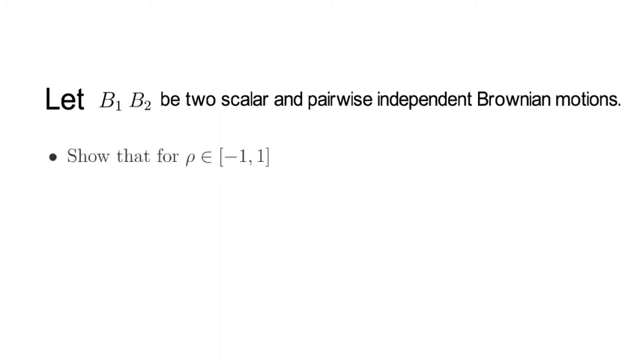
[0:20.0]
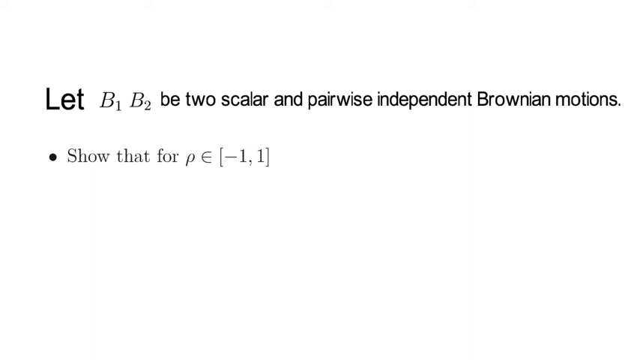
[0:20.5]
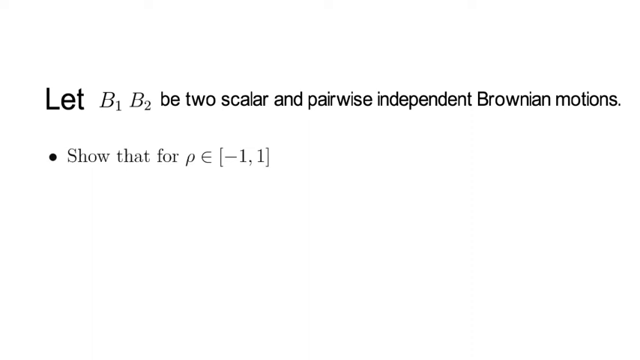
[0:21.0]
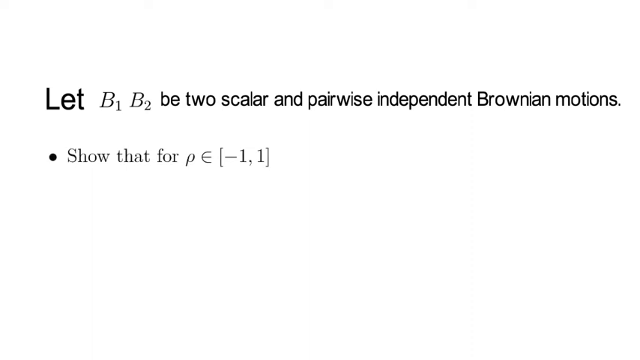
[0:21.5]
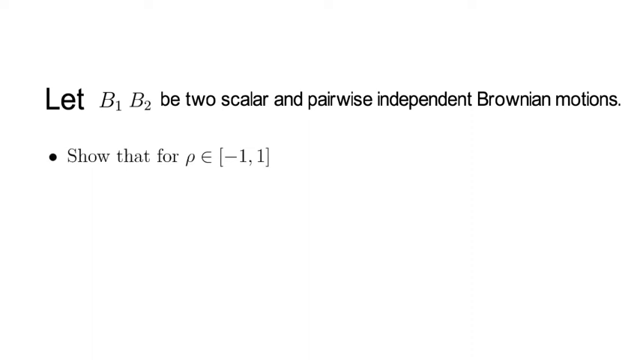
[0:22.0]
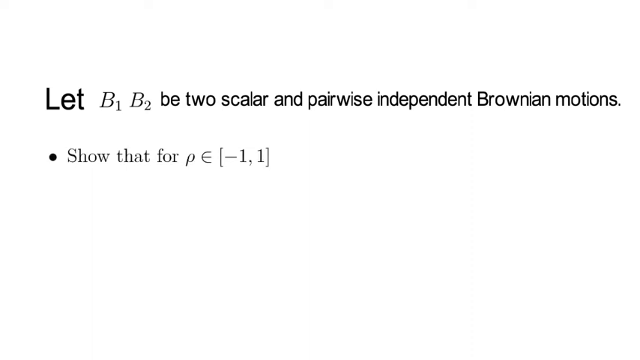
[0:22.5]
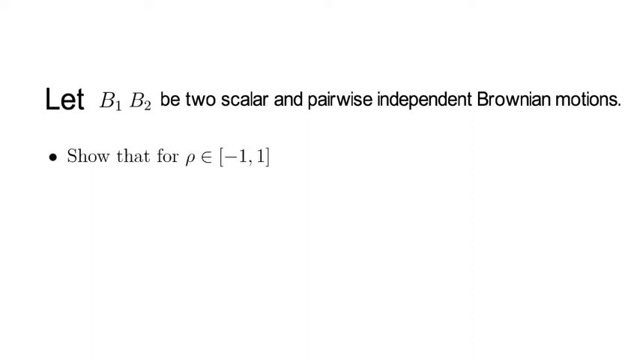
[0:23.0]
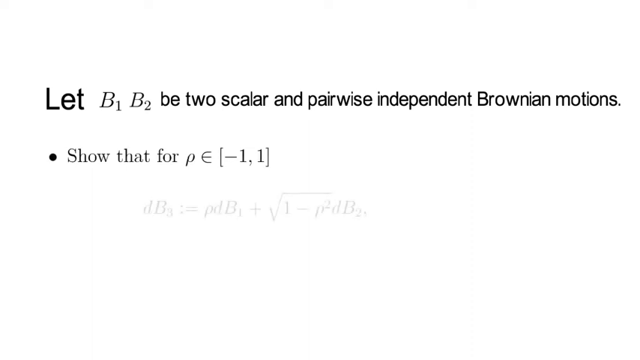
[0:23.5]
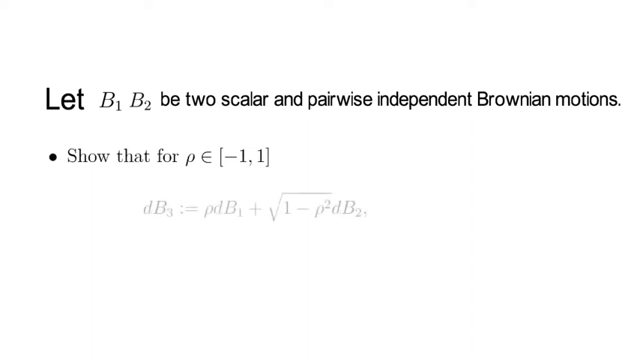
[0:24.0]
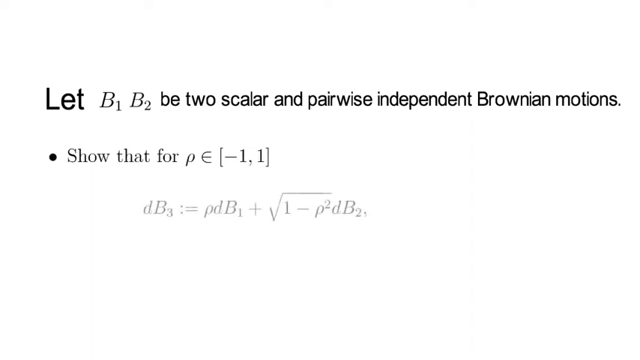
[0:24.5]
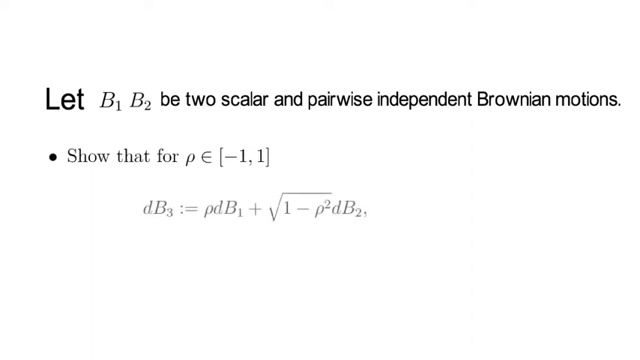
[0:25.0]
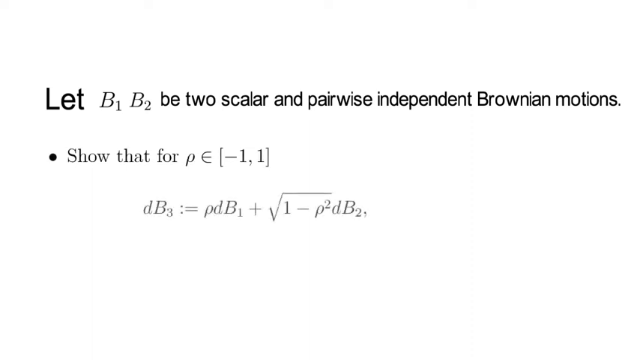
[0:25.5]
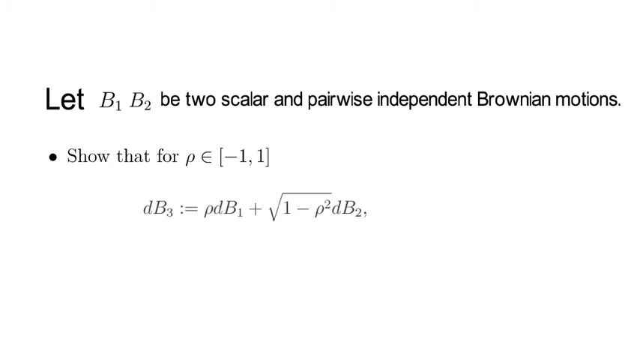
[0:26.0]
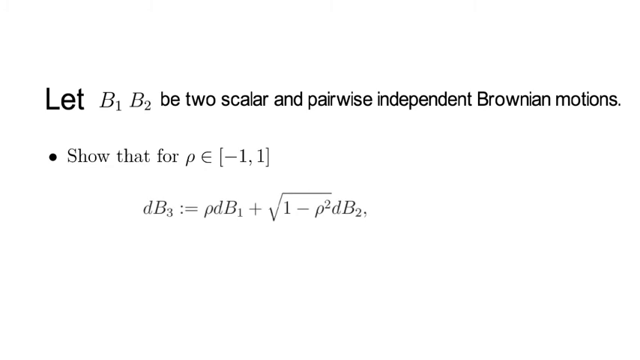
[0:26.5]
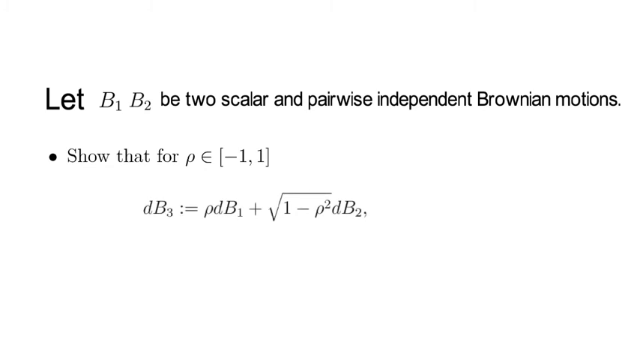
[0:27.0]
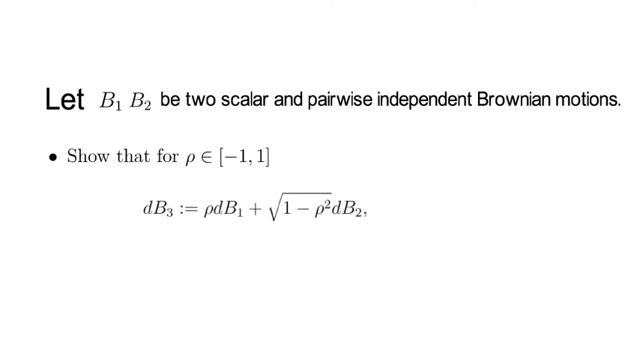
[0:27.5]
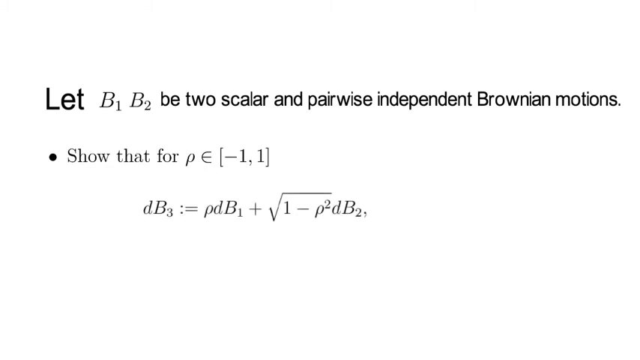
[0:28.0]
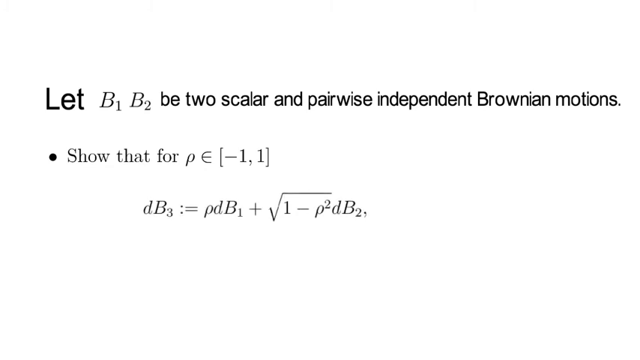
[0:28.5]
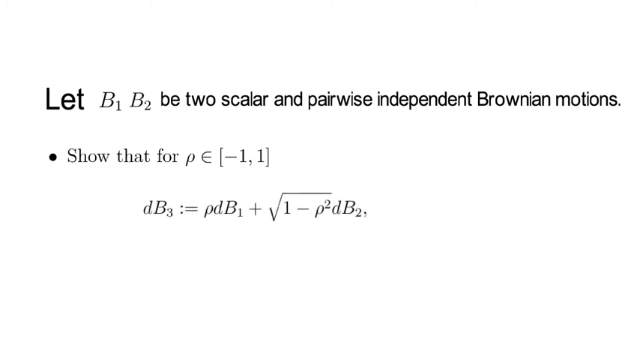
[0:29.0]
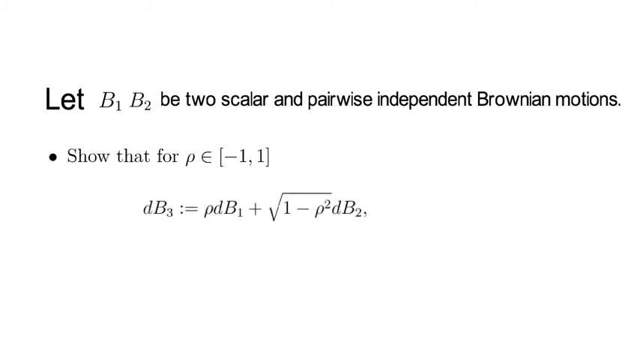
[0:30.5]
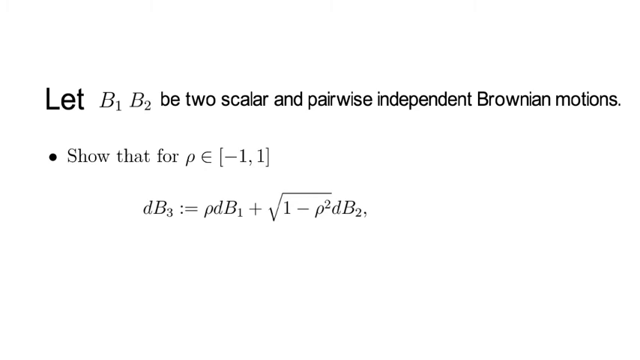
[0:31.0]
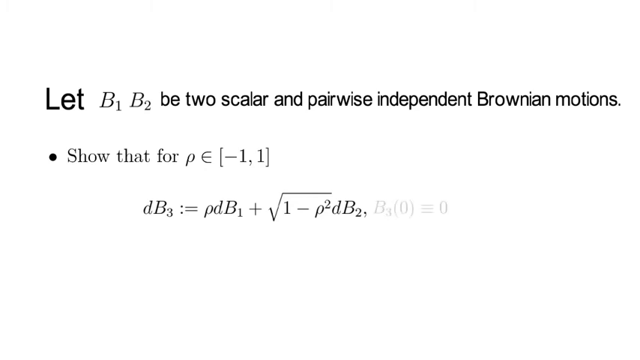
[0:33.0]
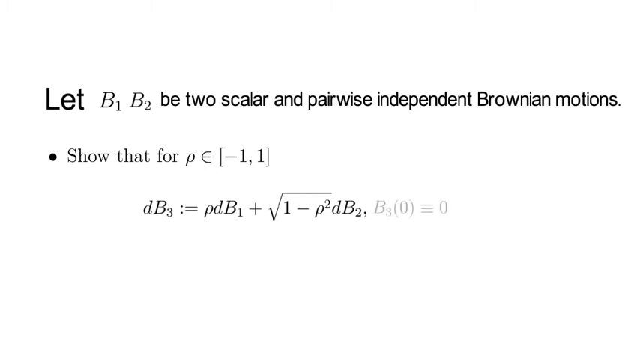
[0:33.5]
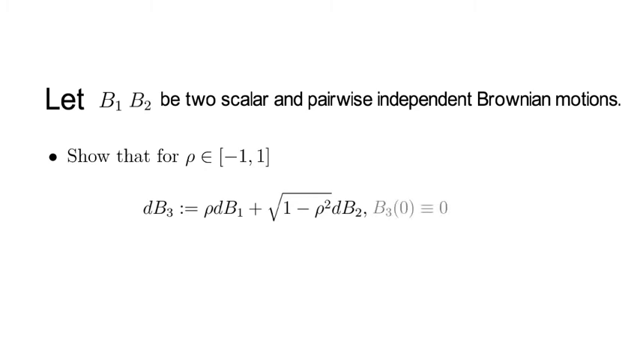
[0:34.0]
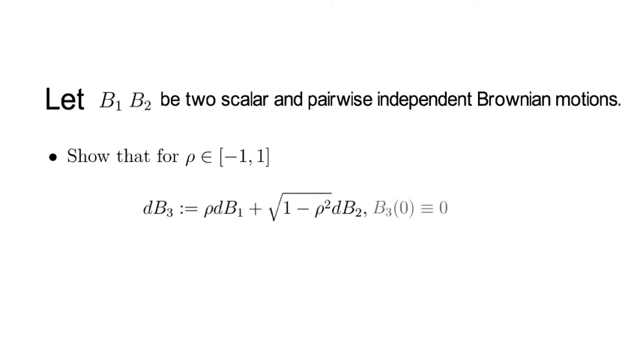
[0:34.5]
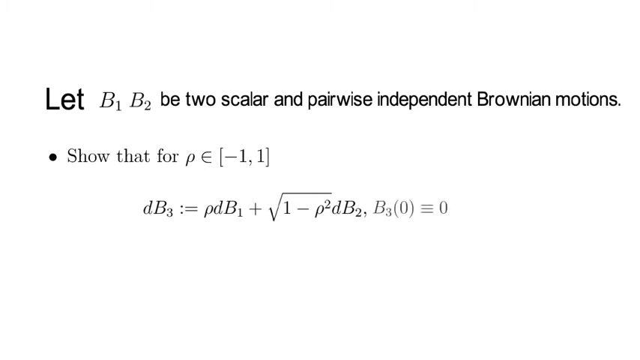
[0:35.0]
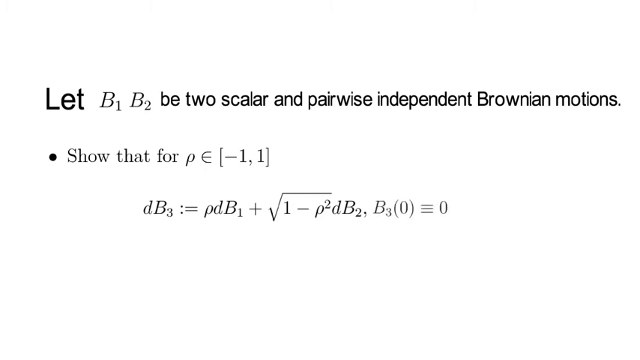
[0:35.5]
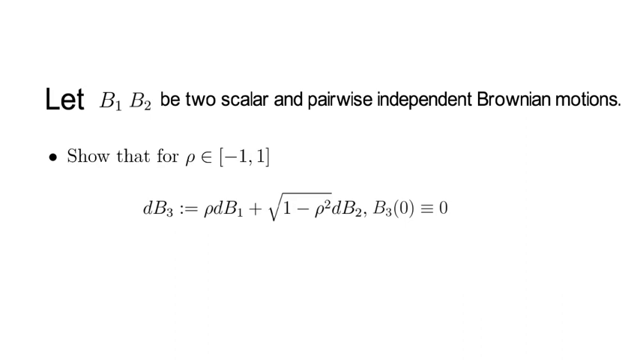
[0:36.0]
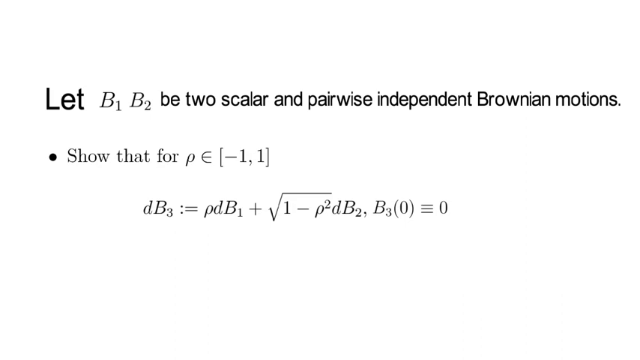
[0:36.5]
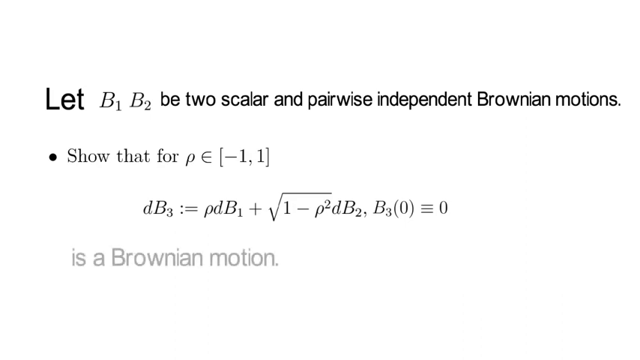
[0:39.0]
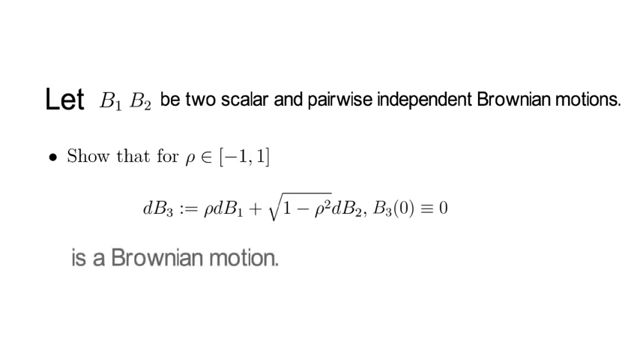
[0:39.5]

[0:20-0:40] A printed paper is shown with text being explained. At the top it reads "let B1, B2" followed by "pairwise independent Brownian motions", and below that "show that for PE-1, 1". Further down is an equation that needs to be solved, beginning "DB3 is equal to PDB1", with text stating it is a Brownian motion. The video continues to show how the figures are worked out. The background is white and the words being written are black, while the bottom part of the paper is greyish. The text keeps being typed as the video progresses, in a lesson about Brownian motions.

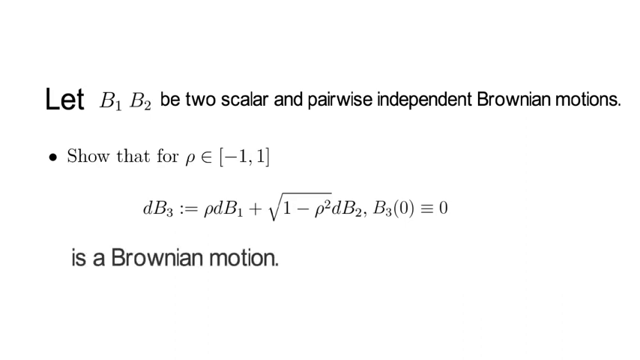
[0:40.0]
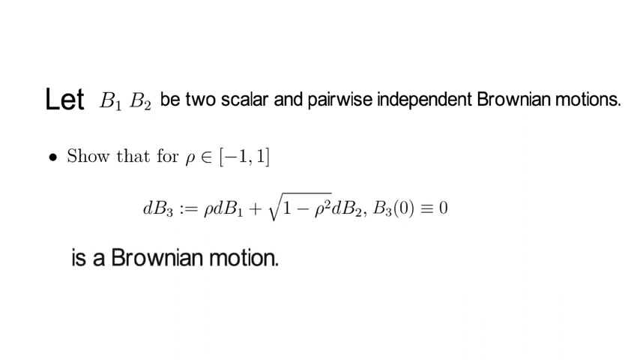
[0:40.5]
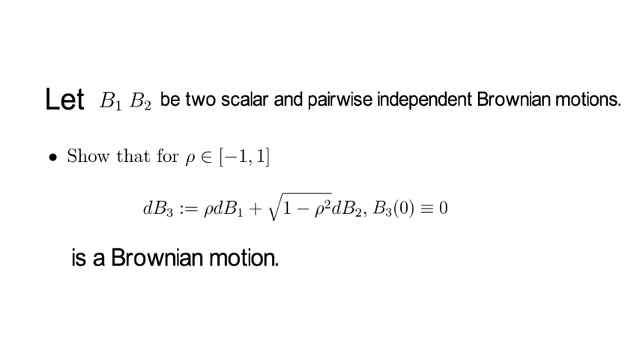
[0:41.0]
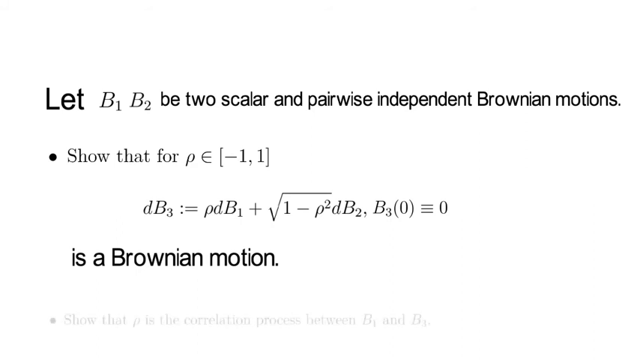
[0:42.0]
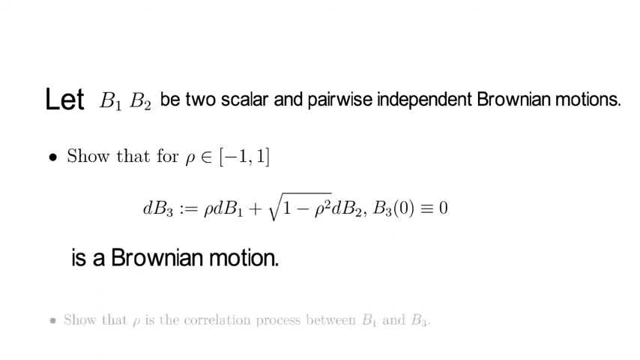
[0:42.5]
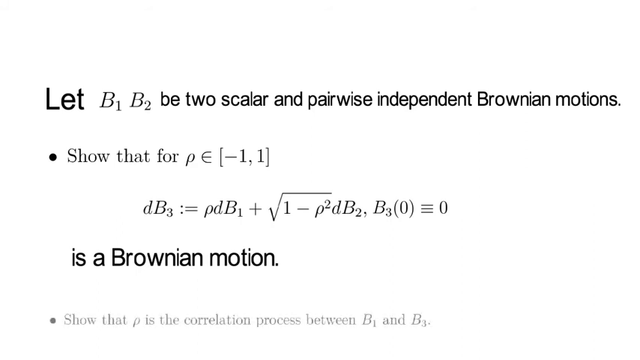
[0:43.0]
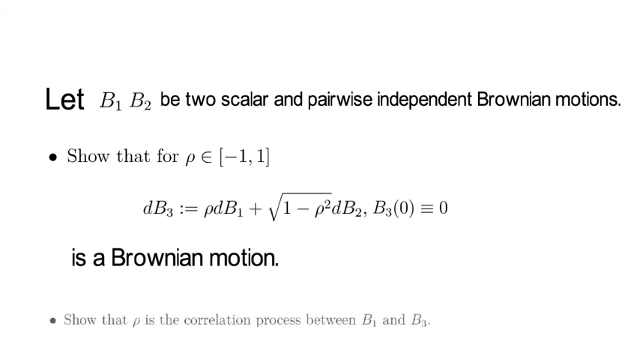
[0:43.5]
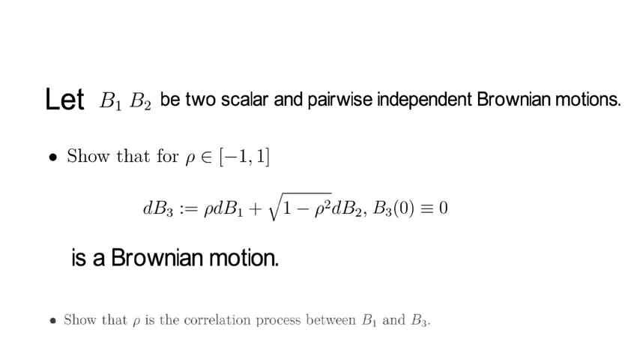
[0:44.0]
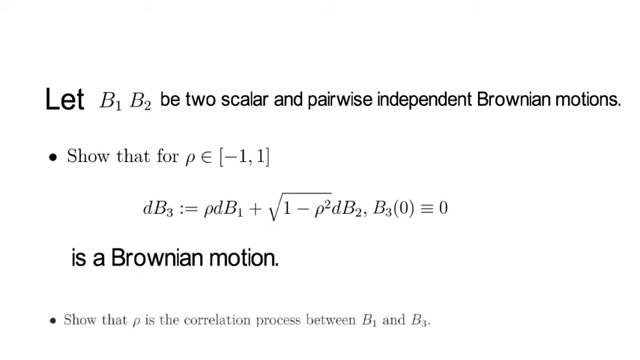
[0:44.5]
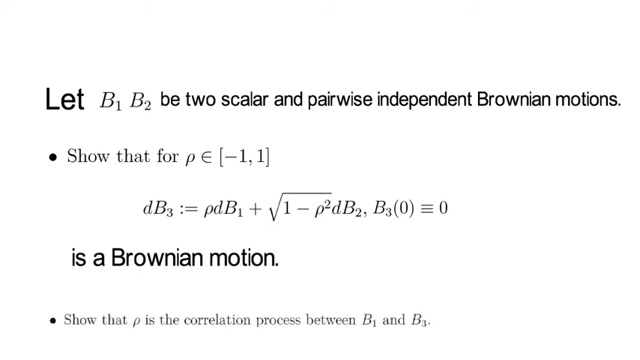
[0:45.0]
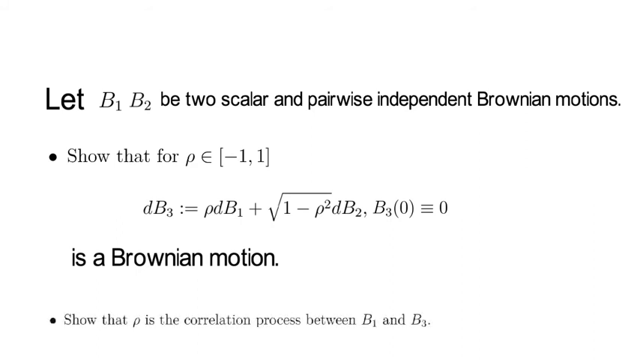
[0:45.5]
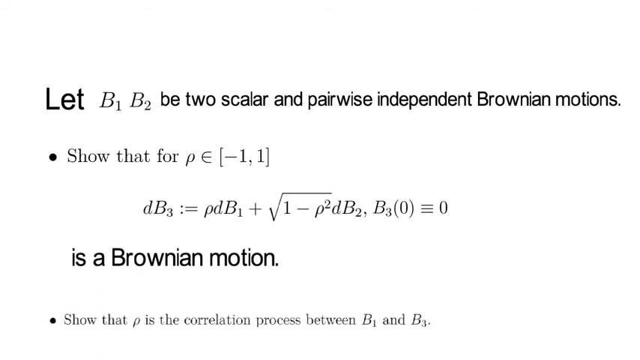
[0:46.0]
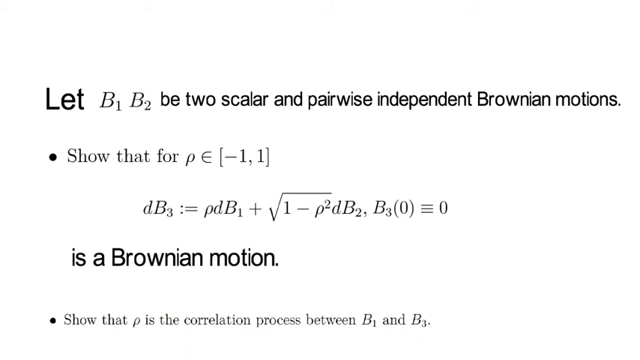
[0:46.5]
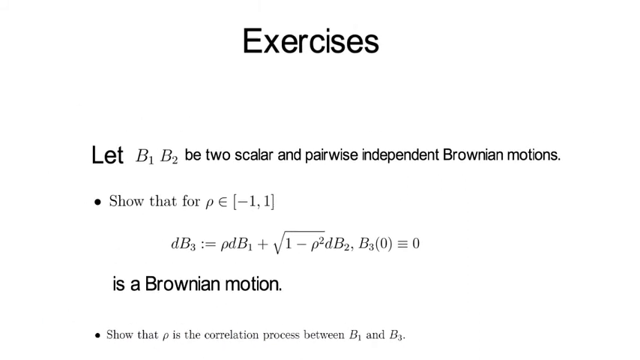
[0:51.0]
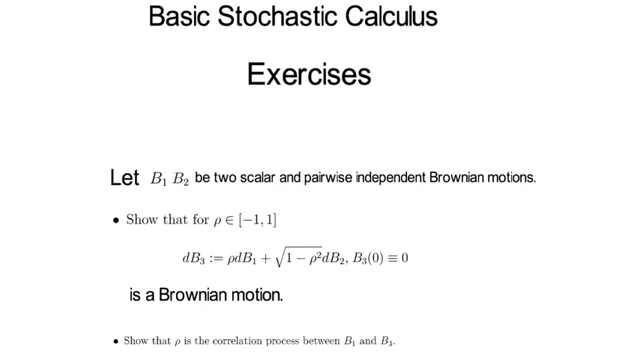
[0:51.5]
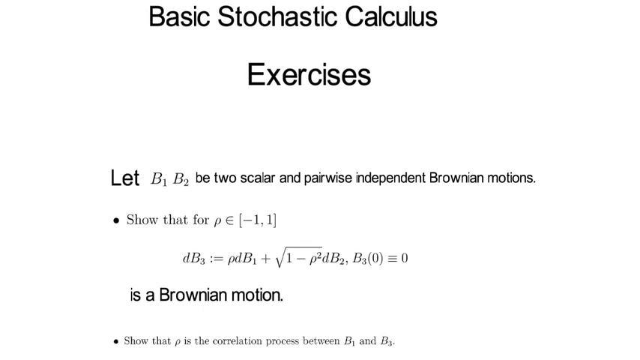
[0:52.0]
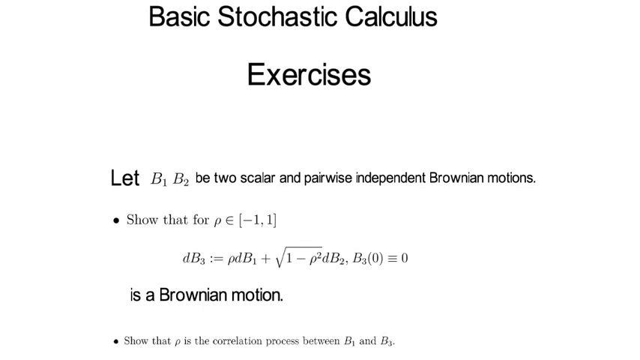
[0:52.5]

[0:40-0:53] What looks like a paper, printed or being printed on a screen, has a white background with words being written from left to right. The first line reads "let B1, B2, scalar and pairwise independent Brownian motions", and the line below starts with a dot and reads "show that for P E -1". Below that an equation has been written, and beneath it the text says "is a Brownian motion". Words are seen being typed at the bottom again.